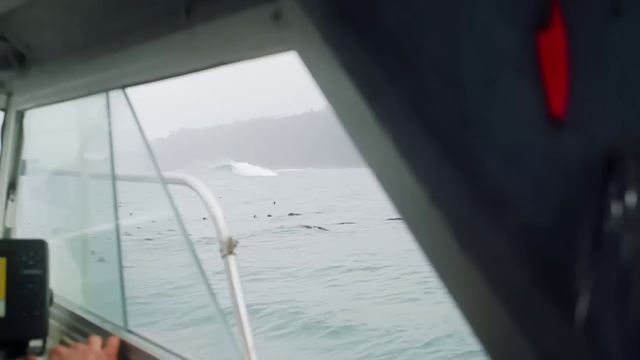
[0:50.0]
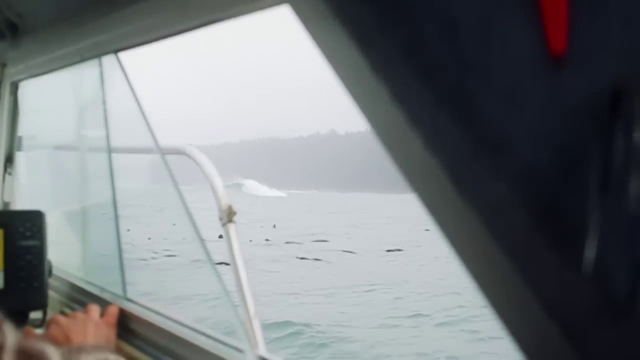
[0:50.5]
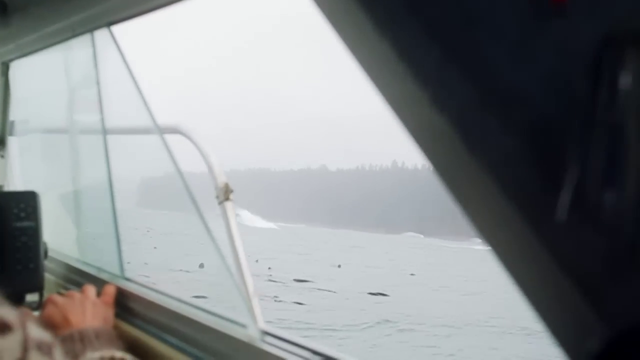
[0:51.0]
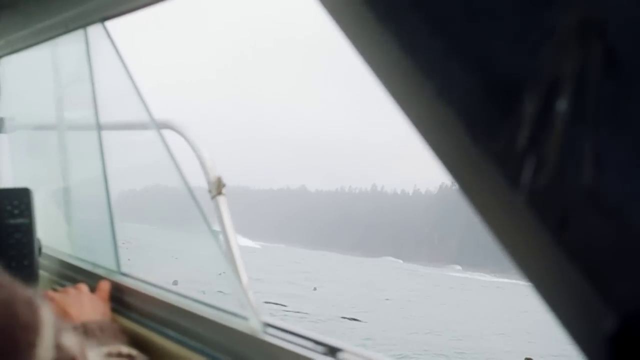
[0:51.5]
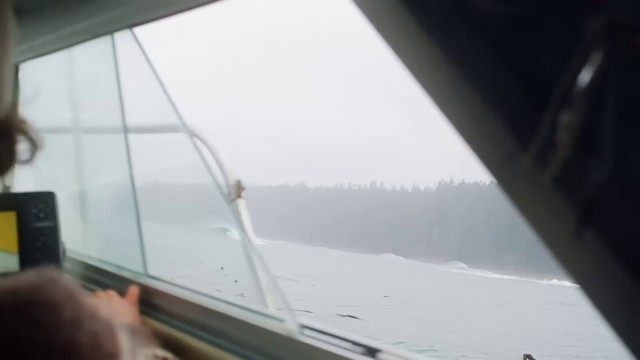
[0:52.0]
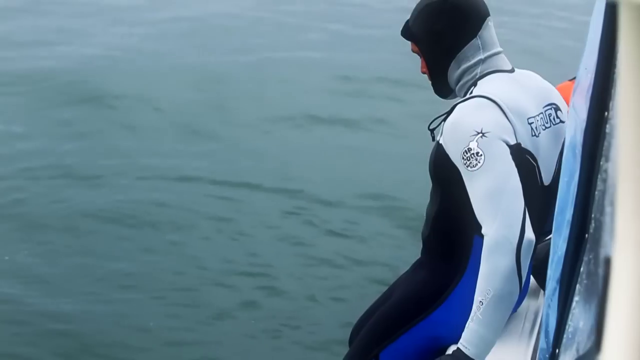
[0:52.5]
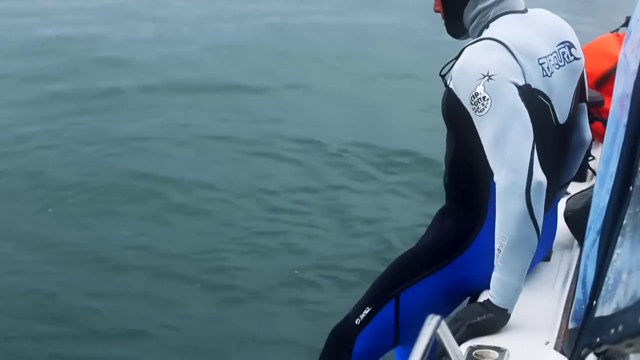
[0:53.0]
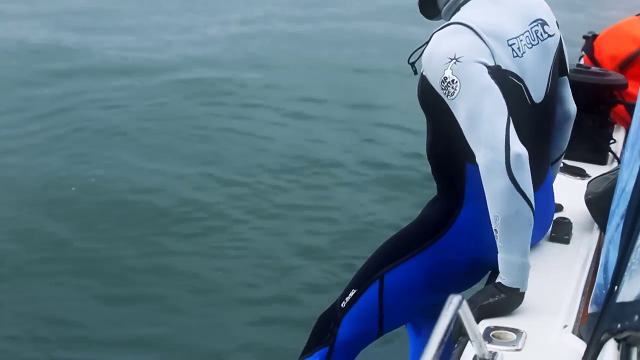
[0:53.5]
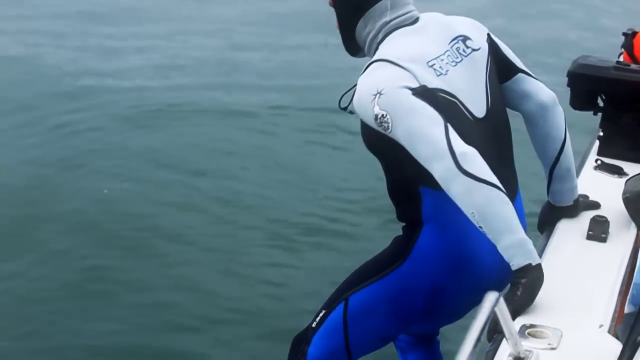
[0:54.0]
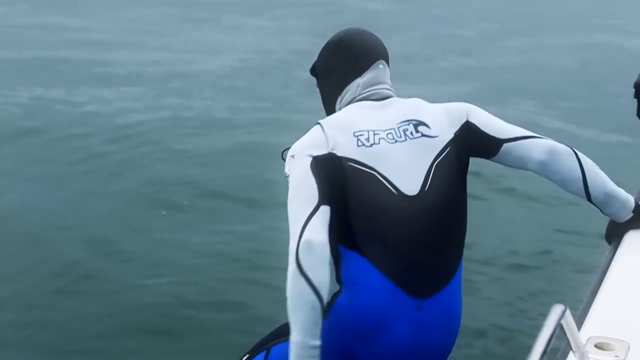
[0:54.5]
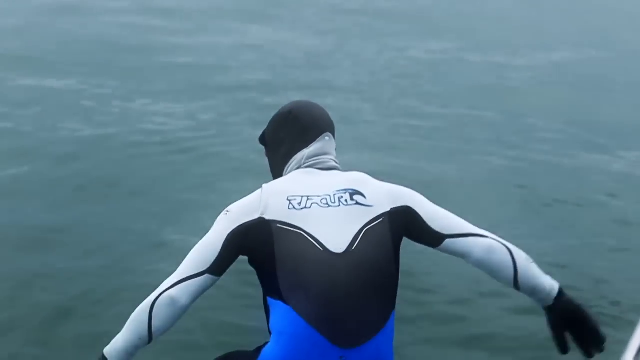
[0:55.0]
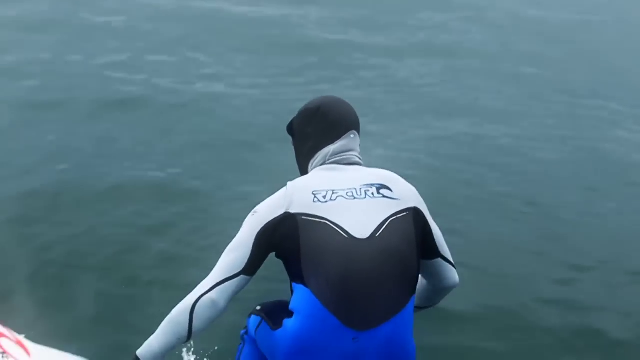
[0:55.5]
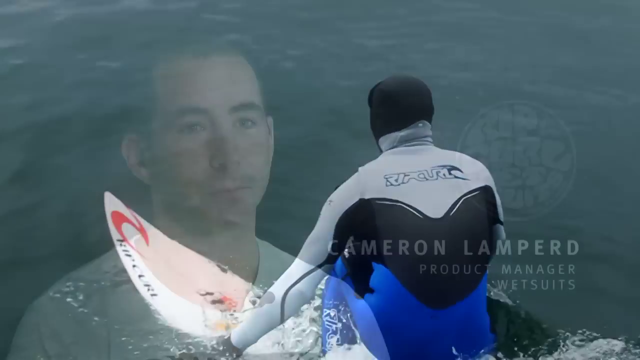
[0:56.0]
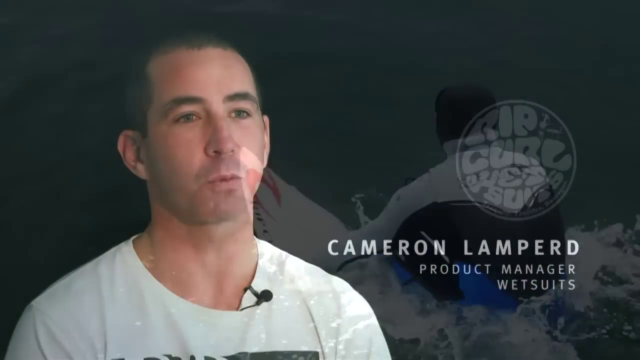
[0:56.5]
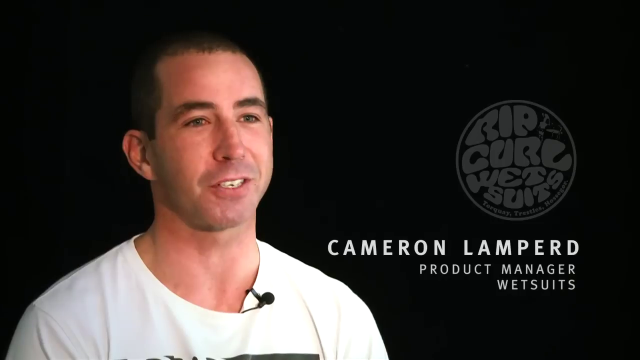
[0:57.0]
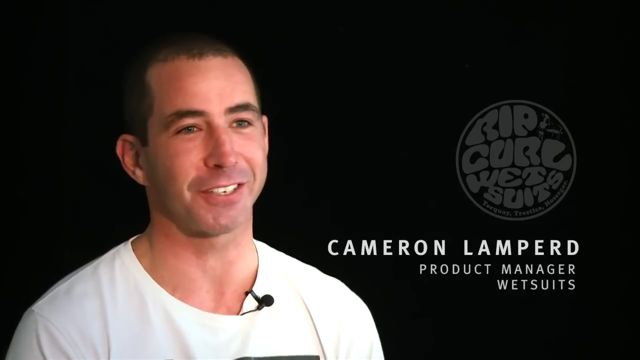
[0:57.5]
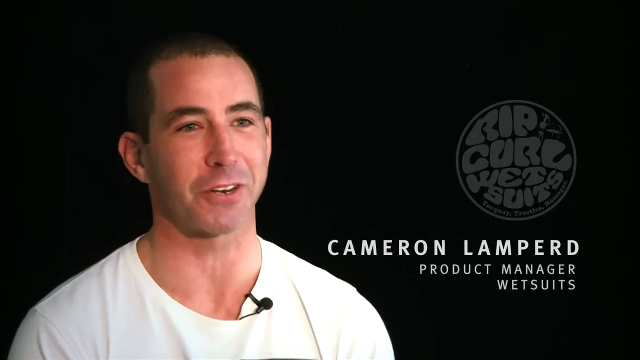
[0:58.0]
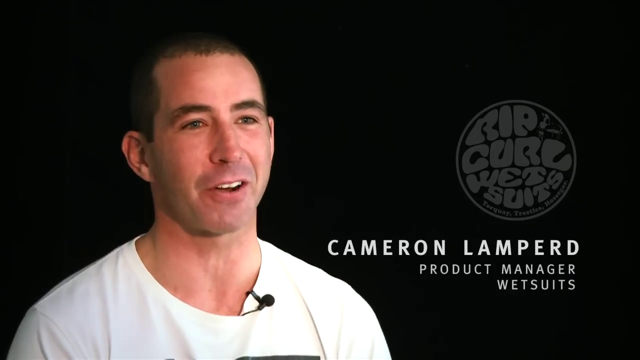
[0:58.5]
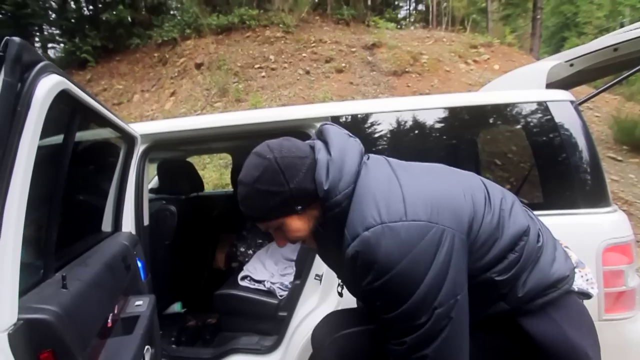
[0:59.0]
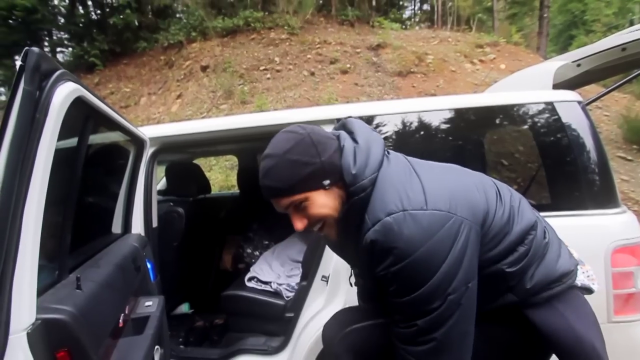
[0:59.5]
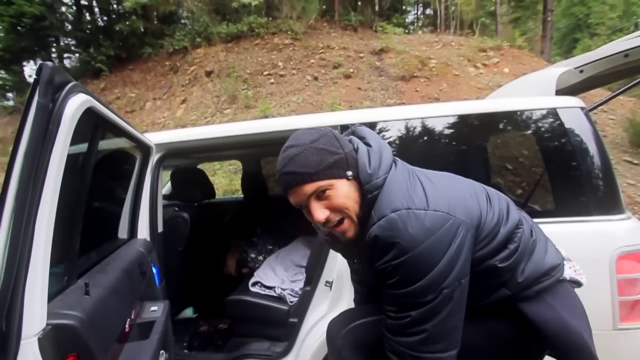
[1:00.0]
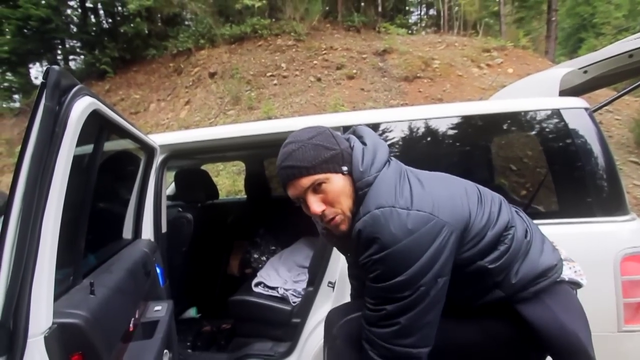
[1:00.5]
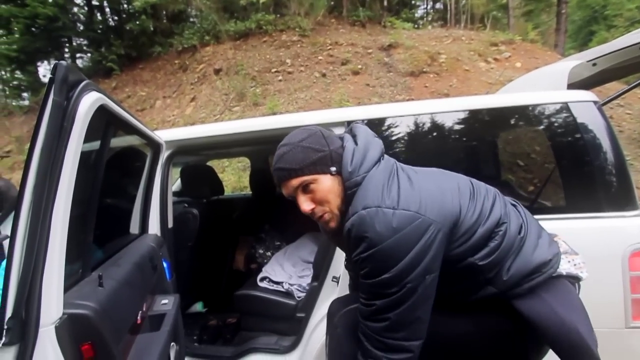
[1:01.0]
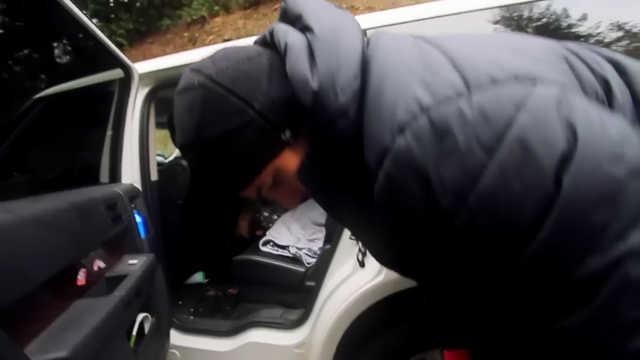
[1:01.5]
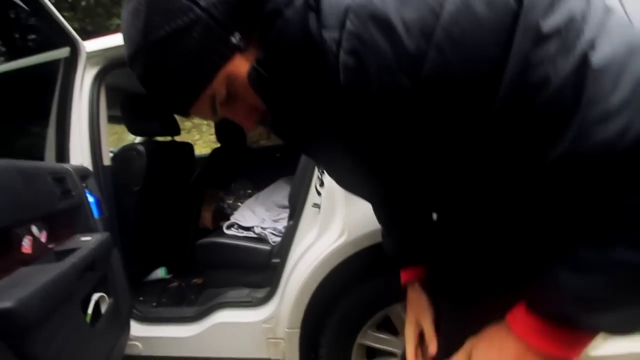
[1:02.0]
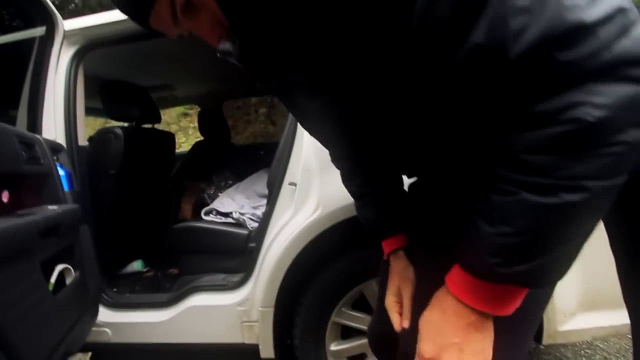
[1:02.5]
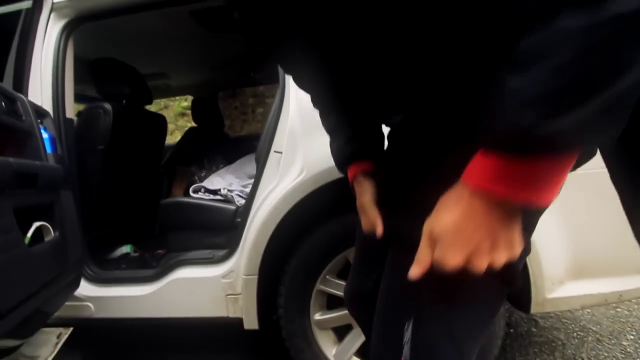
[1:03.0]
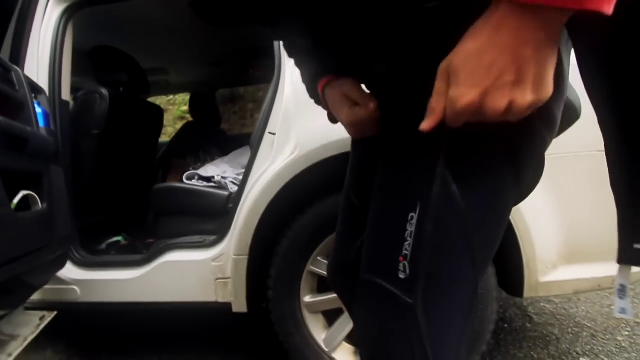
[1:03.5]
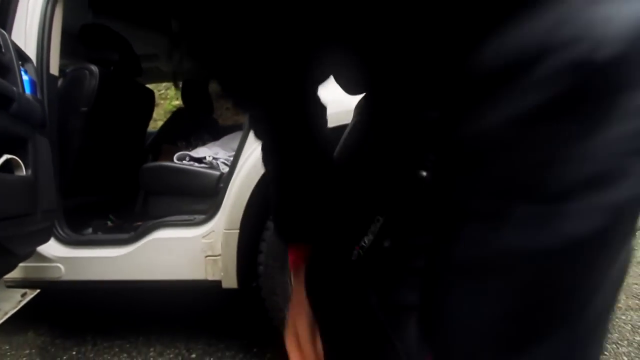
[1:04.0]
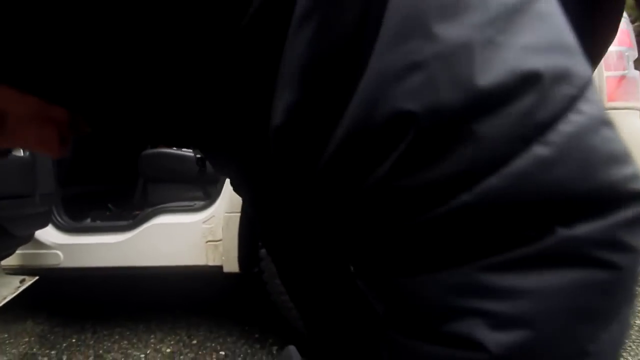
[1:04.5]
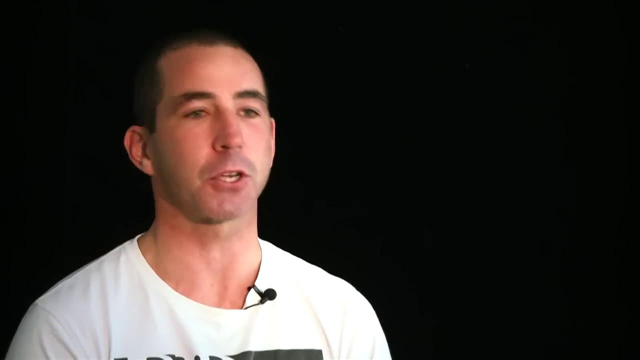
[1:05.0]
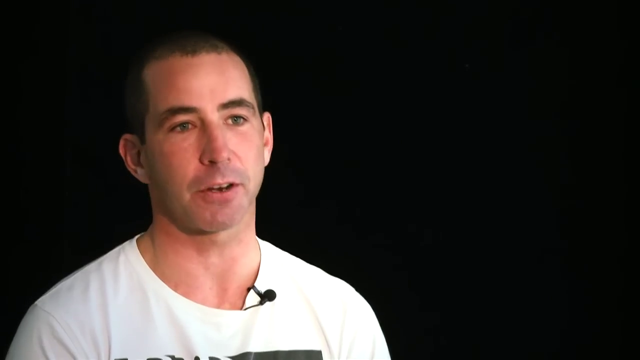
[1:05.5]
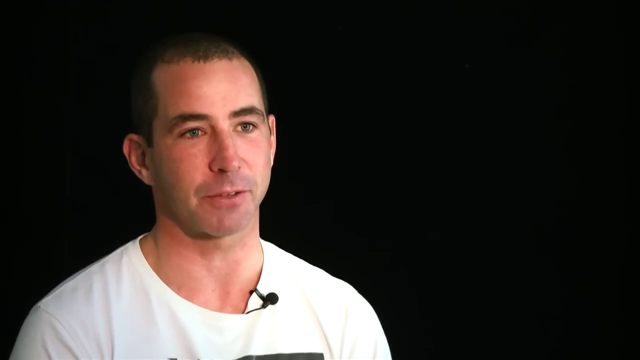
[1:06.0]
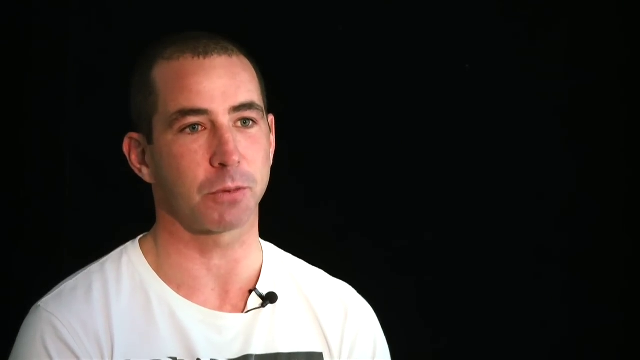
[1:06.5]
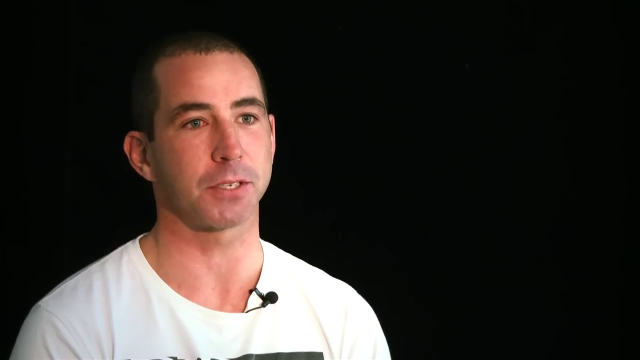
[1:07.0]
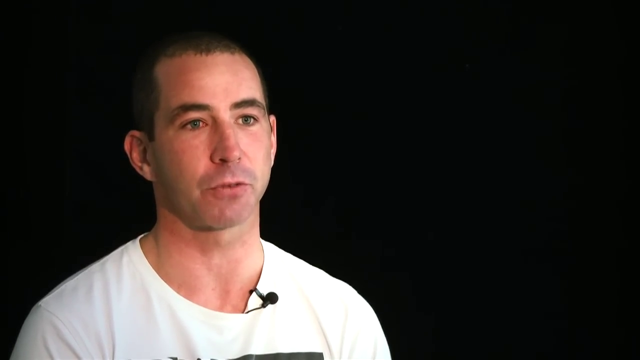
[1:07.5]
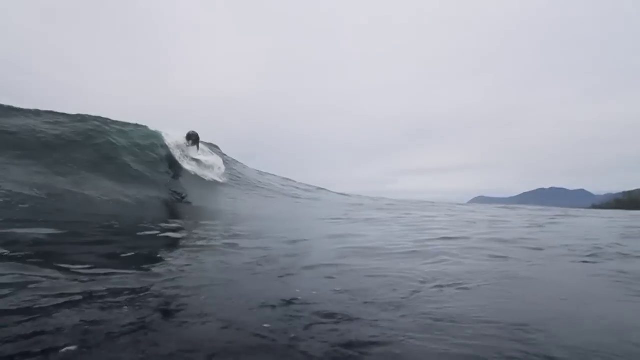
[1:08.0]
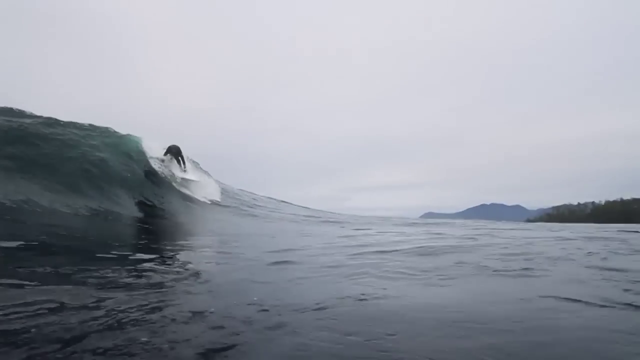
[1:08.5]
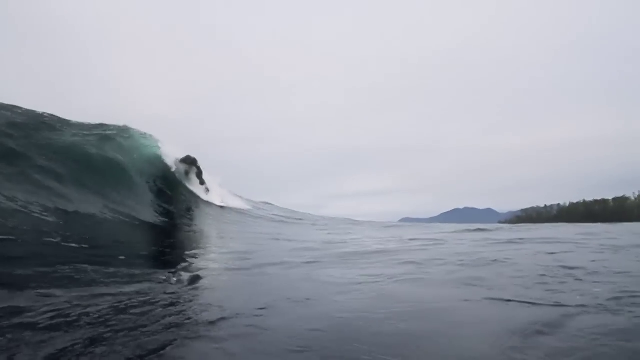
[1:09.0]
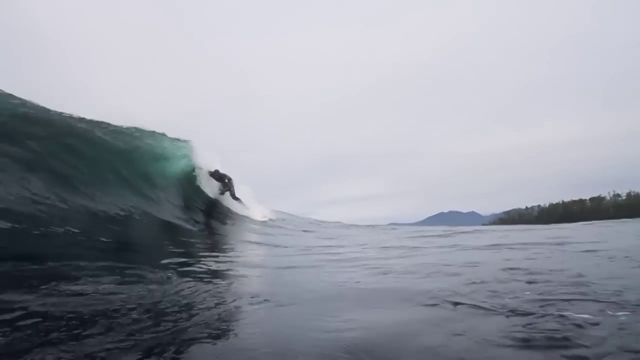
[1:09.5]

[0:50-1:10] Inside a boat, the ocean is visible through the boat's window, which moves up and down. A man in a blue, black and light gray wetsuit prepares to jump off the boat, slides off its edge and jumps down into the water onto a board. Then Cameron Lampert, product manager of wetsuits, appears; he is a white man with black hair and no facial hair, wearing a white shirt, sitting and talking. A white man in a black jacket and a black beanie, possibly in his late 20s or early 30s, stands in front of a white, boxy-looking car parked in front of a dirt hill with green trees. There is a passenger in the passenger seat, and he is in the back of the car on the back driver's side, with the back trunk door open; he seems to be getting dressed, putting his wetsuit on. Cameron appears talking again, possibly the same man who was getting dressed, as the video cuts back and forth. Then the surfer, apparently the same man, is on a white board on top of a wave, apparently in the same ocean as before, with trees, possibly a distant mountain, and the sky in the background. He rides the wave down.